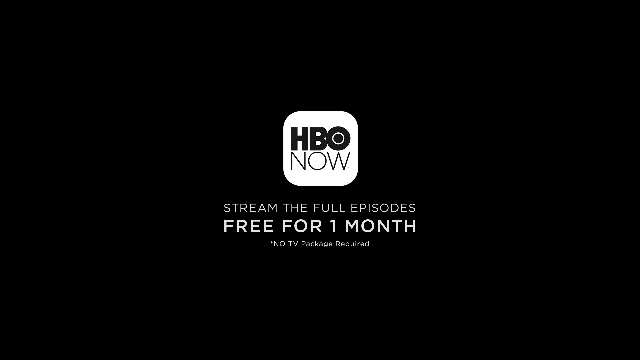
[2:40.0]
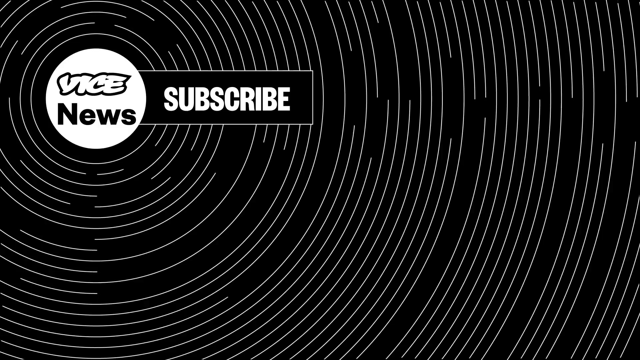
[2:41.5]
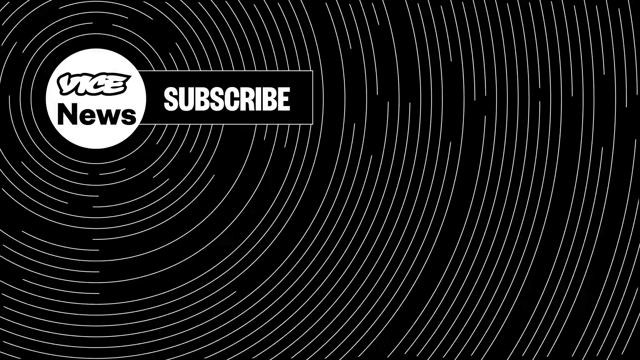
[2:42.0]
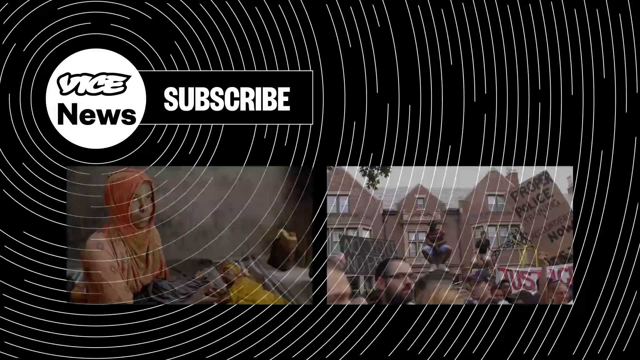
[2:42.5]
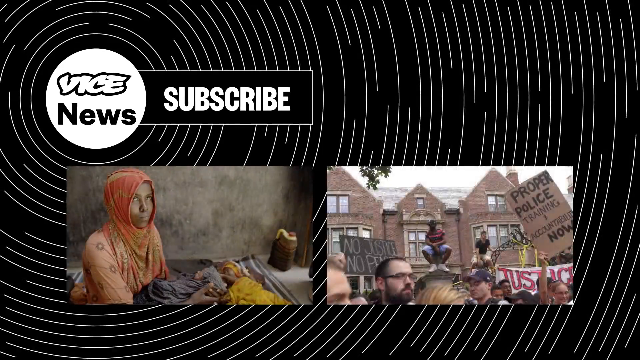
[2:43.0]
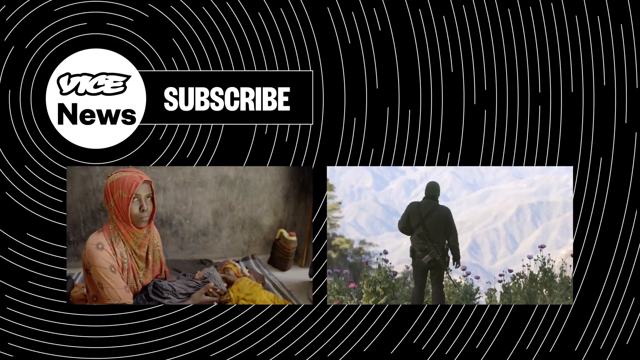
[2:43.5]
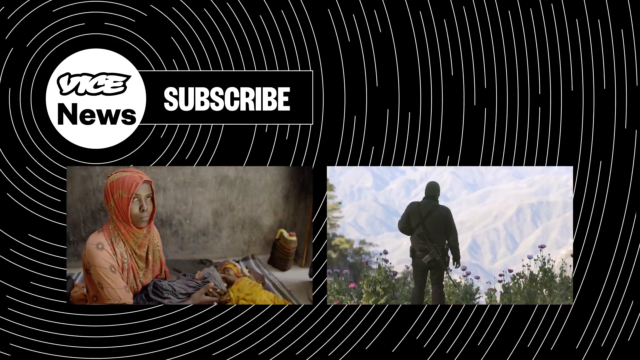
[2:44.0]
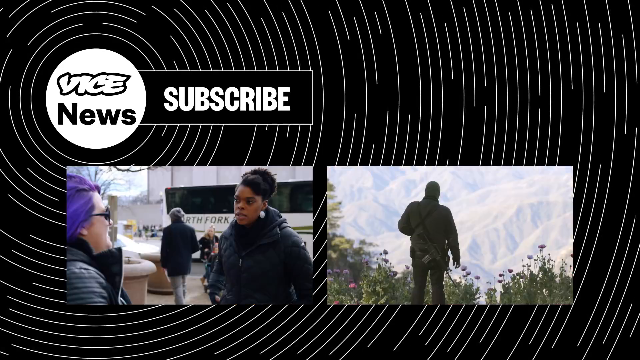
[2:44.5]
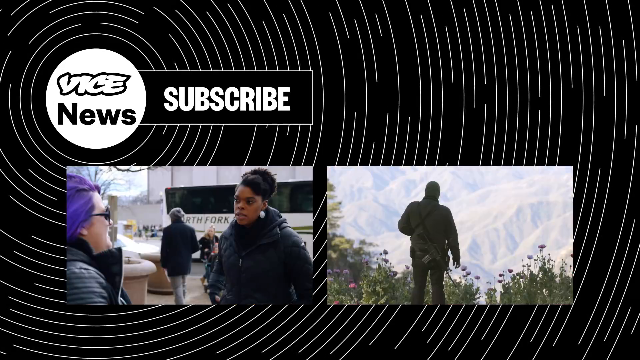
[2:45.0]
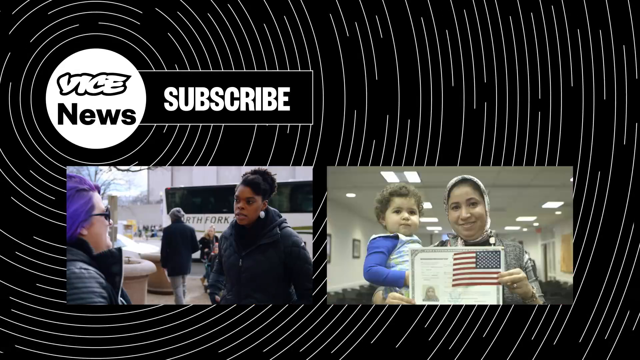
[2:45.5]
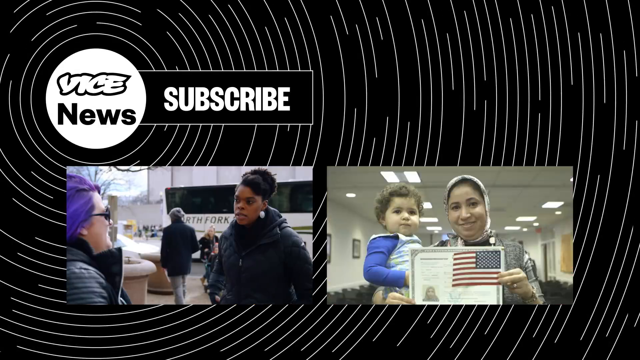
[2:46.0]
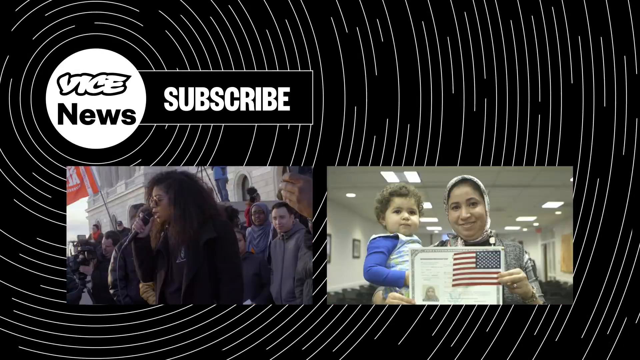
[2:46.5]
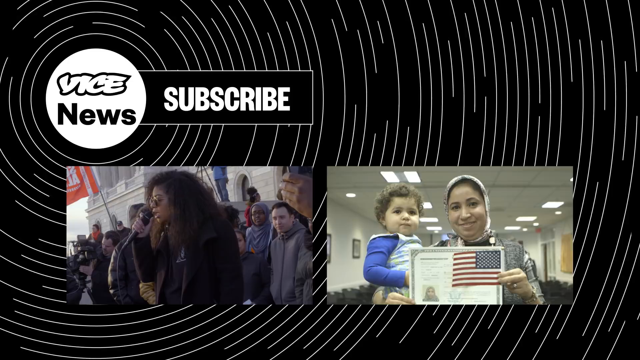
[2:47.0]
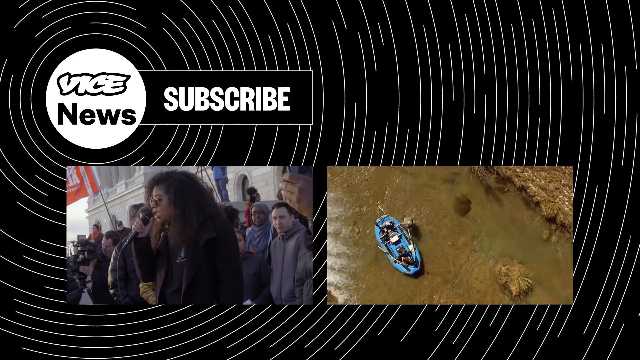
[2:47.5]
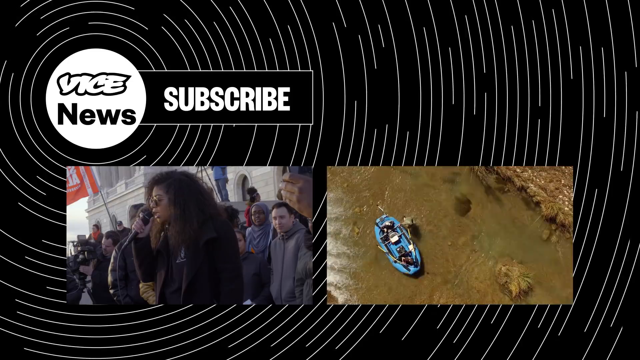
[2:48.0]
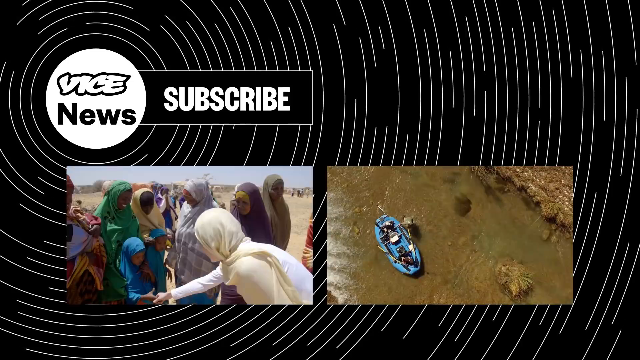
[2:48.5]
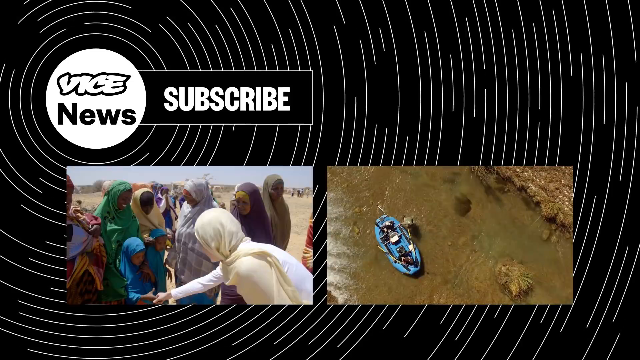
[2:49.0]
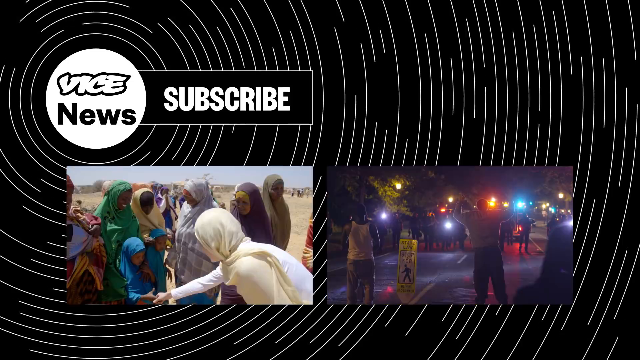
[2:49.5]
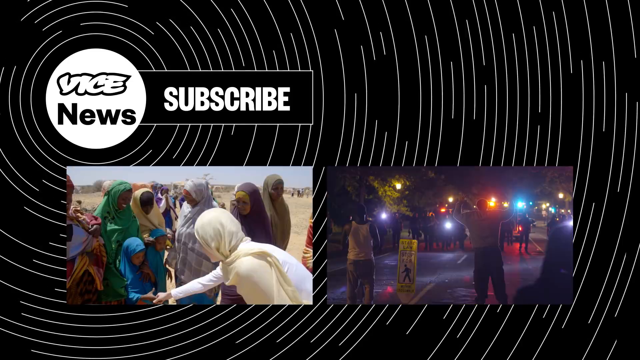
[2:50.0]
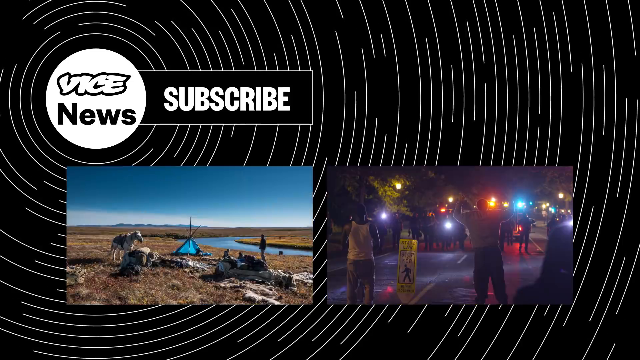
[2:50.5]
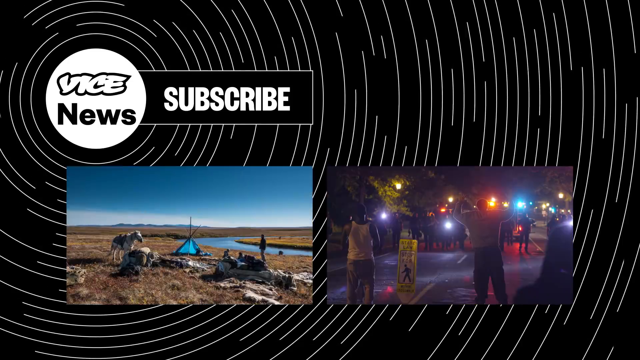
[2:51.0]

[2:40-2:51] The end card shows "HBO now" in a white square, with the text "stream the full episodes free for one month no TV package required" in white uppercase letters on a black background. Another caption follows: "Vice News" in a white circle and "subscribe", over a background with a sort of black-on-white circular pattern. Various news pictures are beneath. On the left, a woman in an orange headdress sits looking sad, looking up at the camera. To its right is a protest picture with captions, showing lots of people's heads, someone sitting on top of a wall, and placards reading "no justice, no peace" and "proper police training and accountability now". It cuts to the rear of a soldier. The woman in the headdress is replaced by two people, a woman with purple hair and another woman standing to the right, talking to one another. To the right of that is a woman in a headdress and a young boy holding up an American flag and a certificate. Then a woman holding a microphone speaks to a rally with a red flag behind. A top view shows a blue boat in a river. Various people in the desert wear headdresses of different colours, and a woman in a cream one shakes hands with a small girl in a blue headdress. Then, in the dark, some people are lined up with their hands up in front of other people who look at them, with light shining on them. Finally there is a flat landscape with a horse, some people in a tent, and a river running through it.